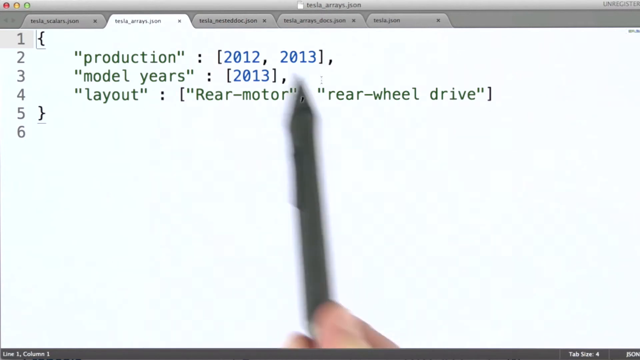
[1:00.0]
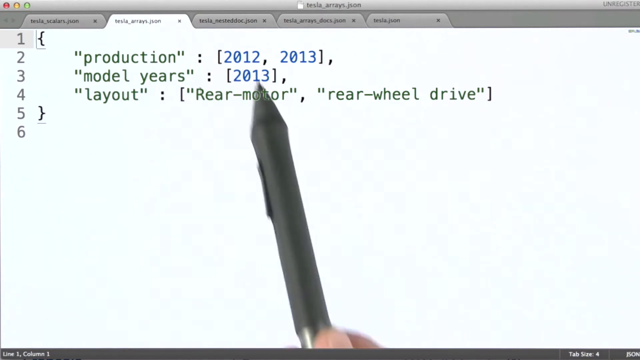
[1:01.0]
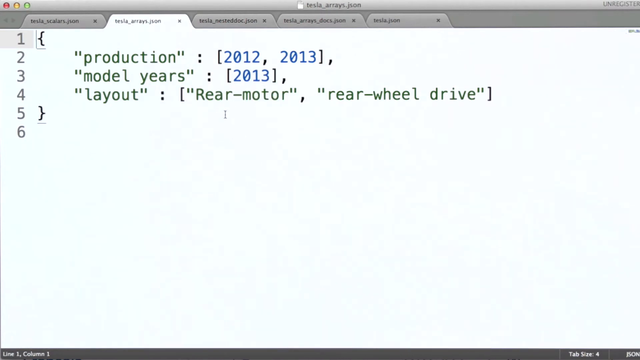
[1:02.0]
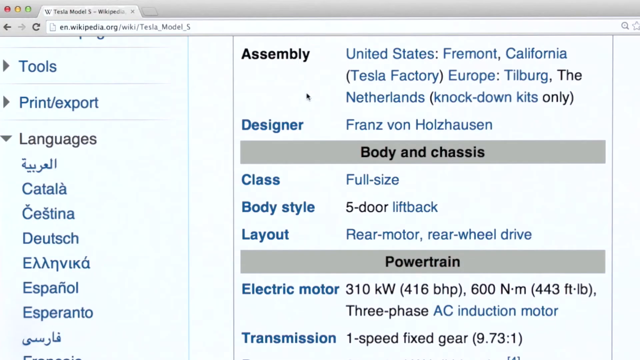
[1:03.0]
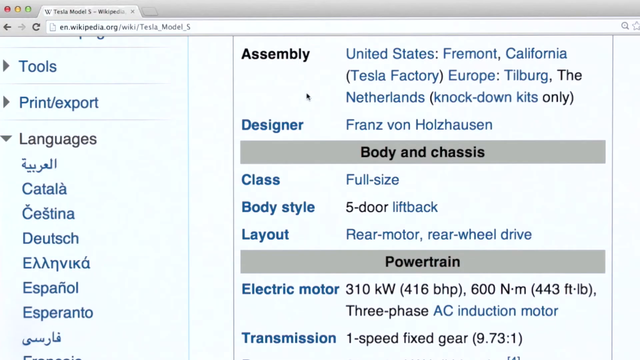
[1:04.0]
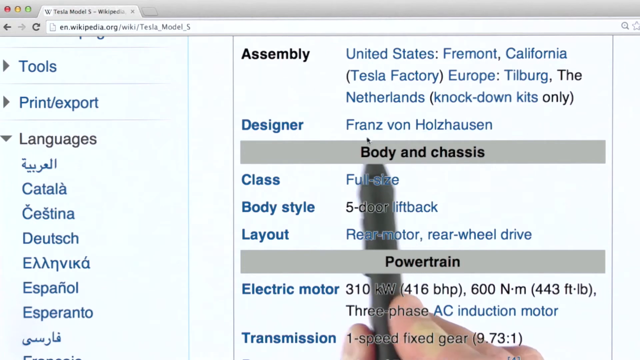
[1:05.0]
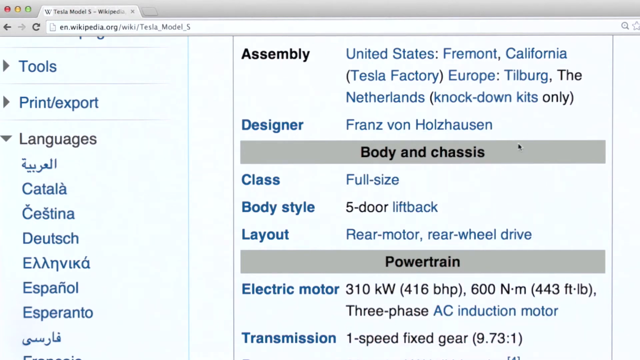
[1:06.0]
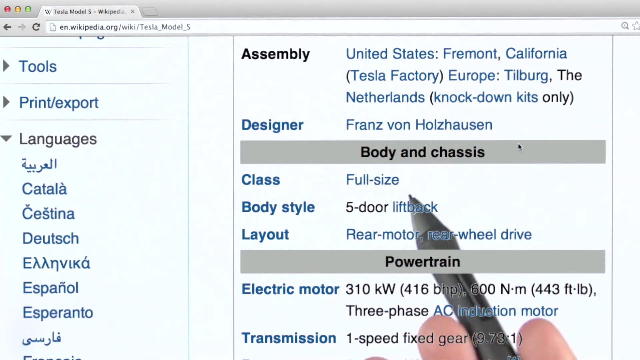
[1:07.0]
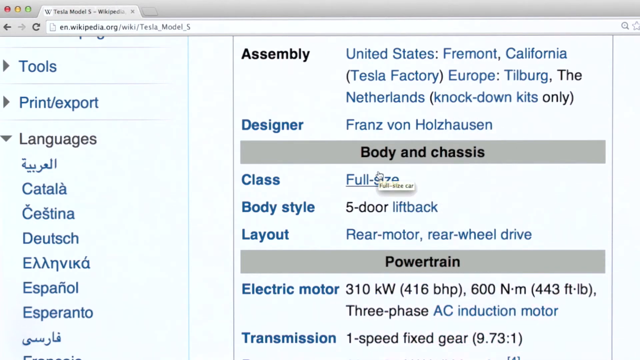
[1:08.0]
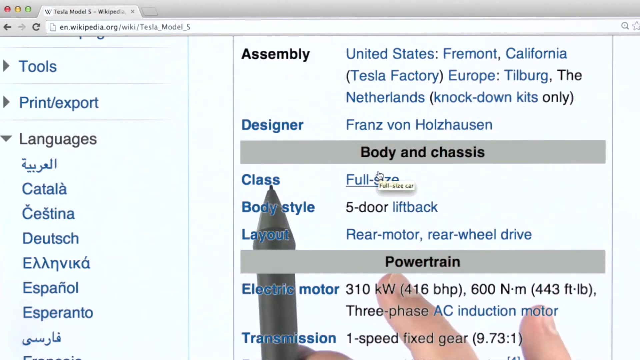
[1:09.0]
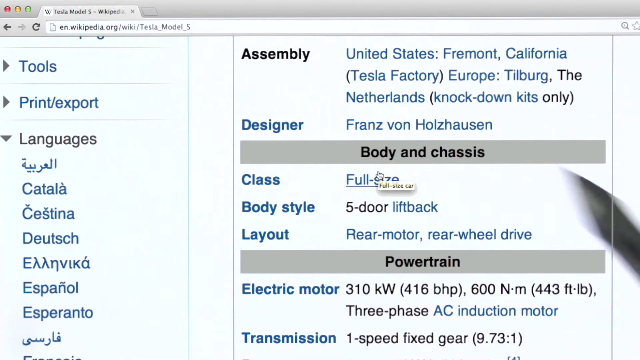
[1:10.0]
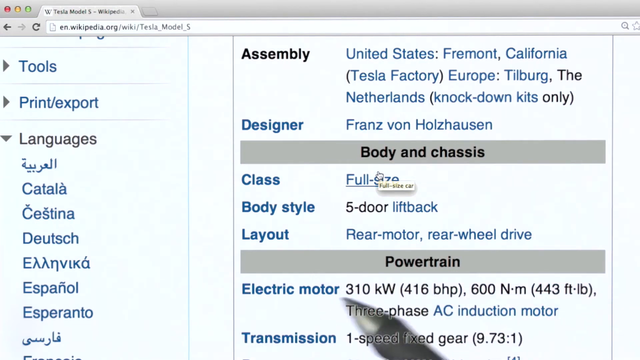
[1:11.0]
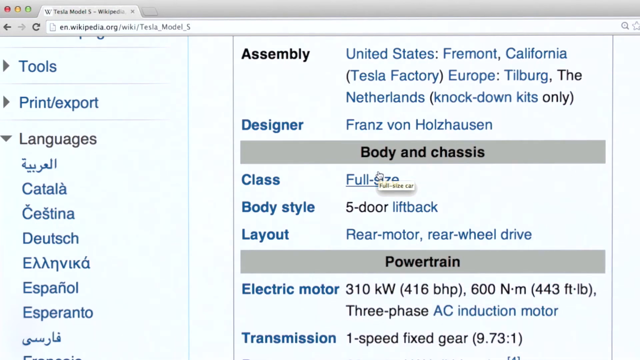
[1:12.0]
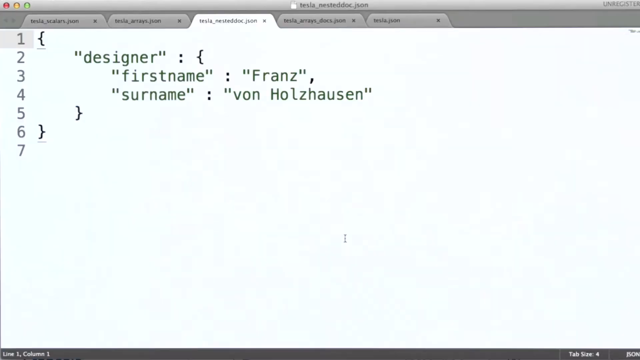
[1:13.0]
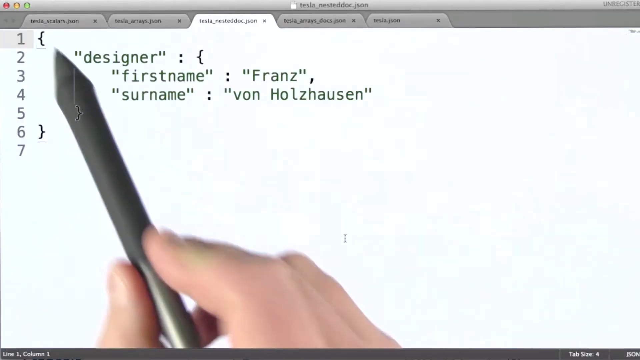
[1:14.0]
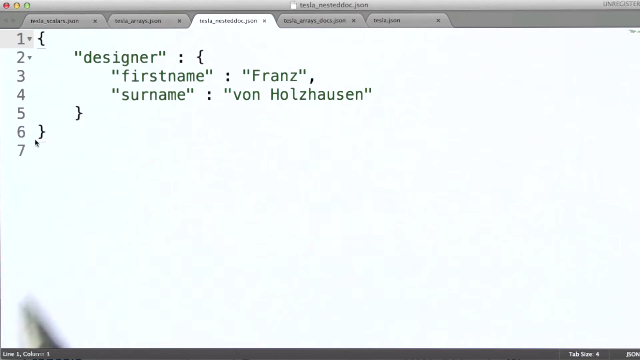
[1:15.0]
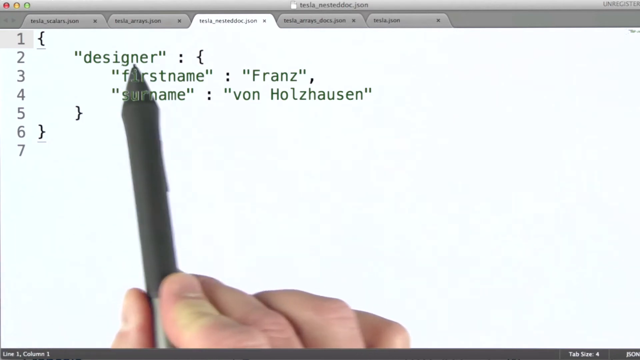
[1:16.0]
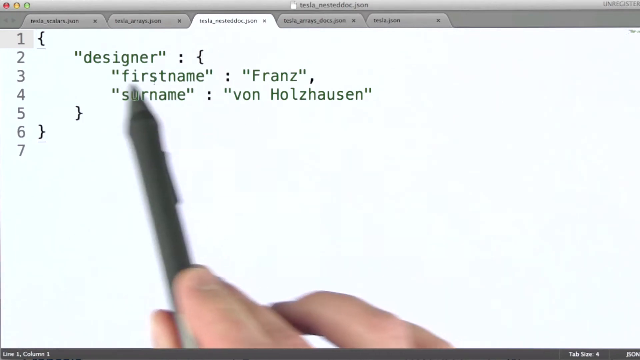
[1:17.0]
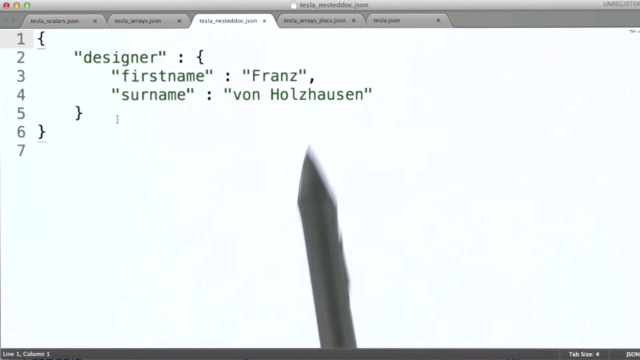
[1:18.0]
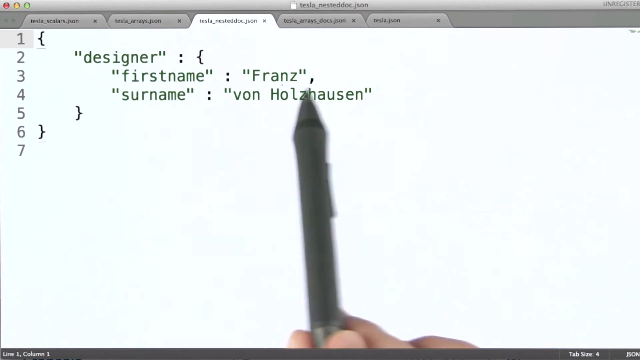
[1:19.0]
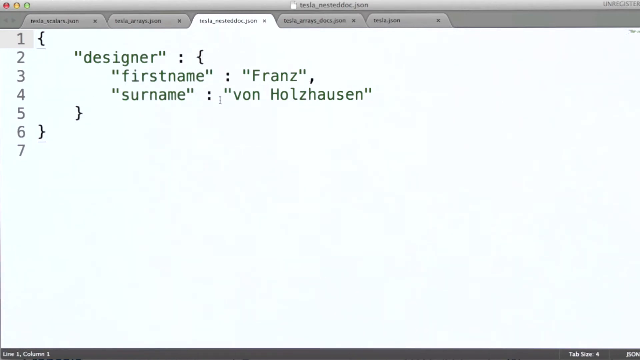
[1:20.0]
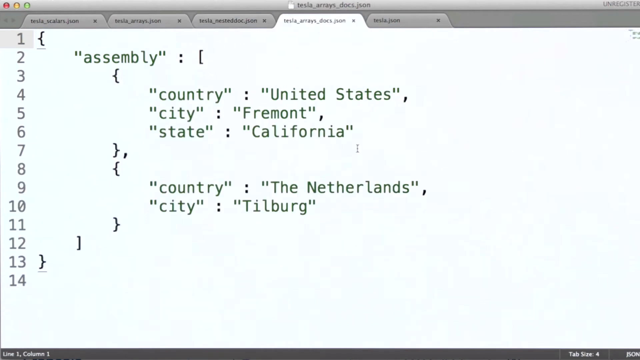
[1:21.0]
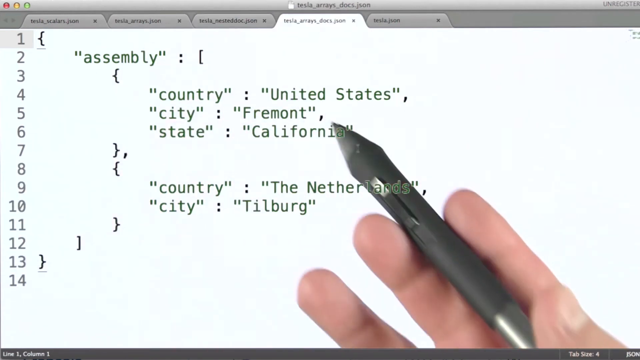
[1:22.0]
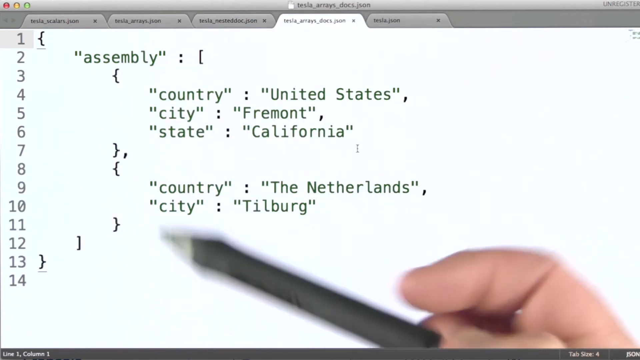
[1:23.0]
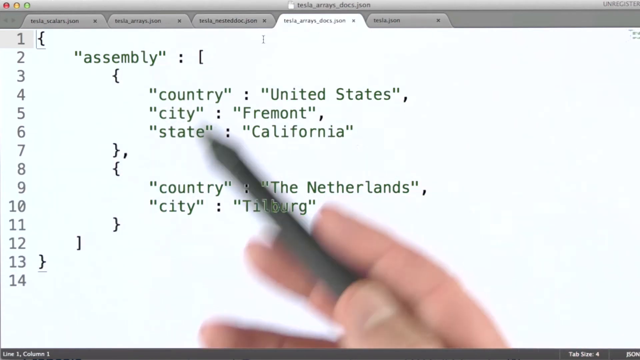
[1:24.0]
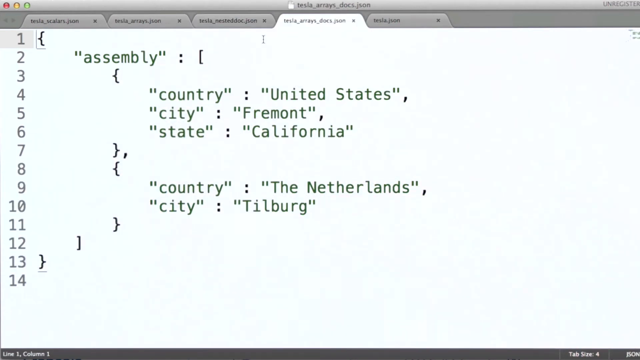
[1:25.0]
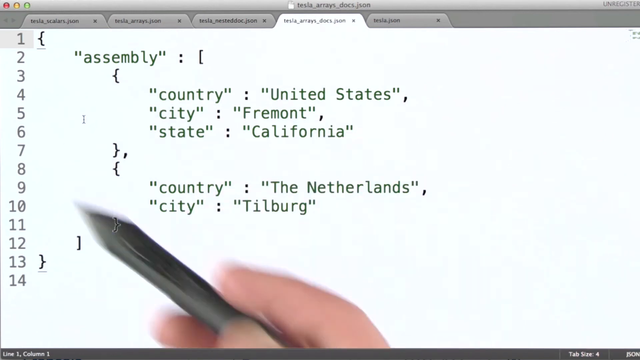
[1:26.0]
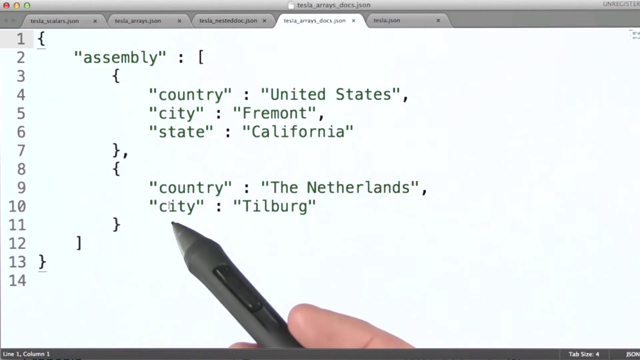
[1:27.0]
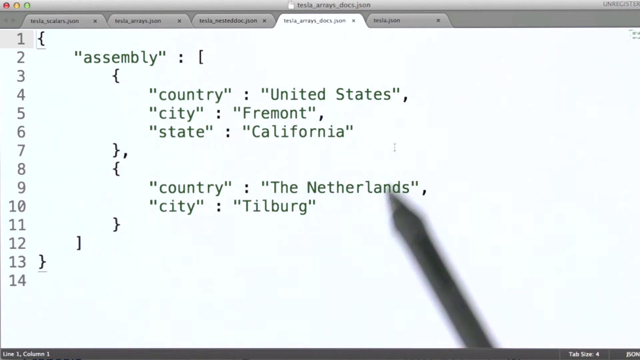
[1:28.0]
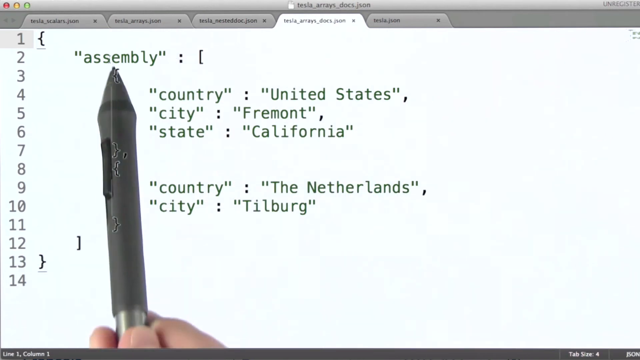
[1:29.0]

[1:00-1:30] Lines of code are still on screen, now apparently a different section. Line two shows "production": [2012-2013]; the next line shows "model years": [2013]; the next shows "layout": ["rear motor", "rear wheel drive"]. A pen points at the screen and then at different lines on the main Wikipedia page. The view then goes to a coding screen showing "designer":, with "first name": "Franz" below it and "surname": "von Halshausen" on the next line. This apparently shows how the Wikipedia page is coded.